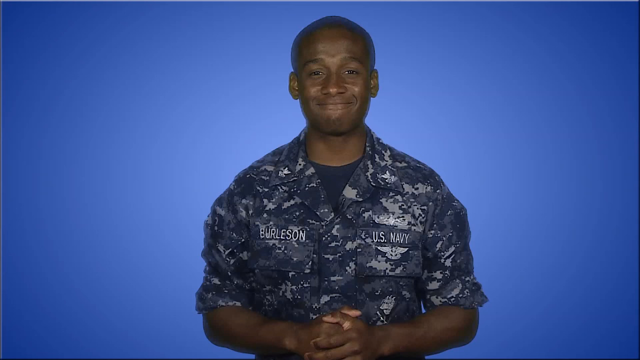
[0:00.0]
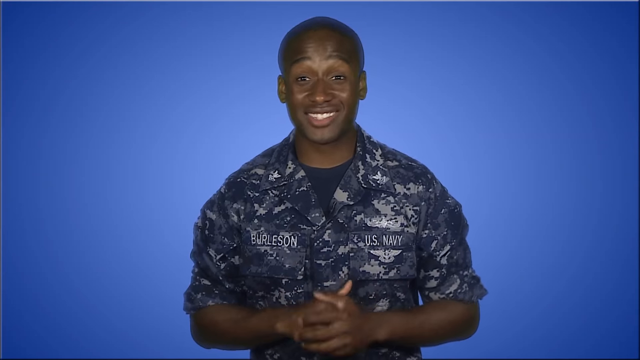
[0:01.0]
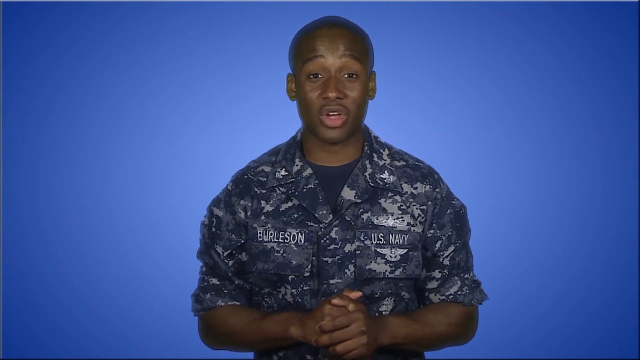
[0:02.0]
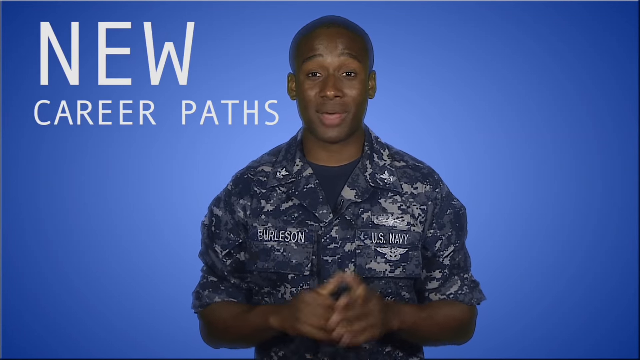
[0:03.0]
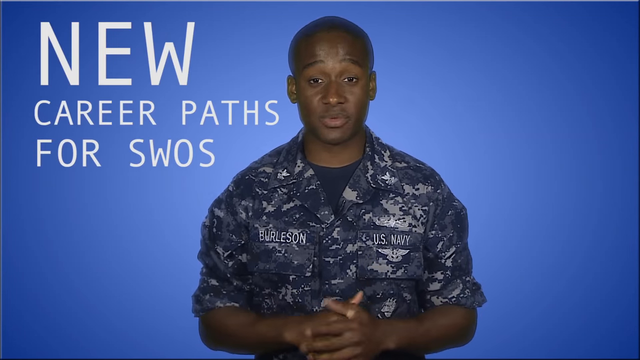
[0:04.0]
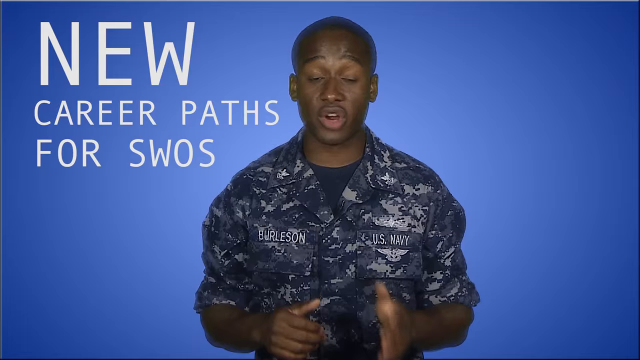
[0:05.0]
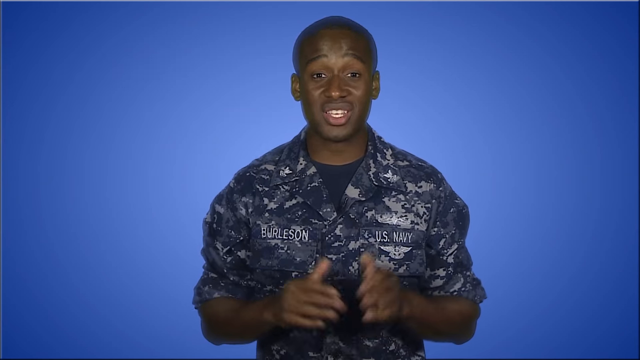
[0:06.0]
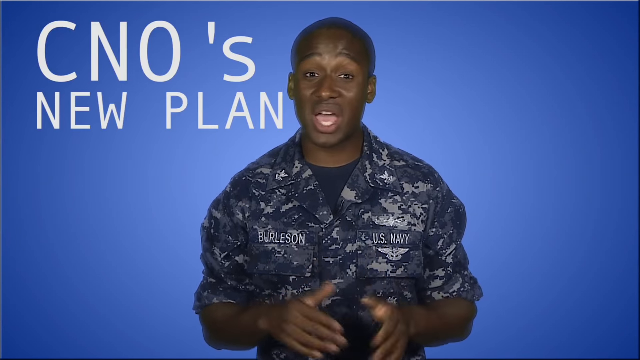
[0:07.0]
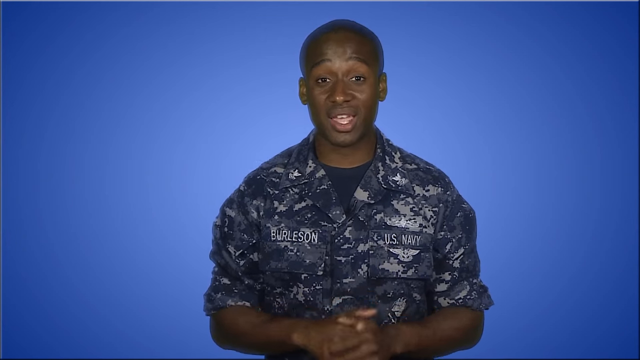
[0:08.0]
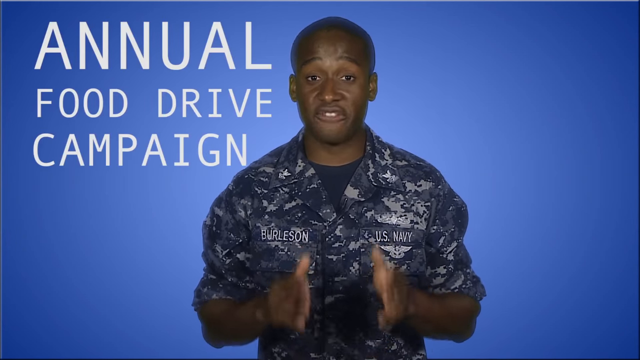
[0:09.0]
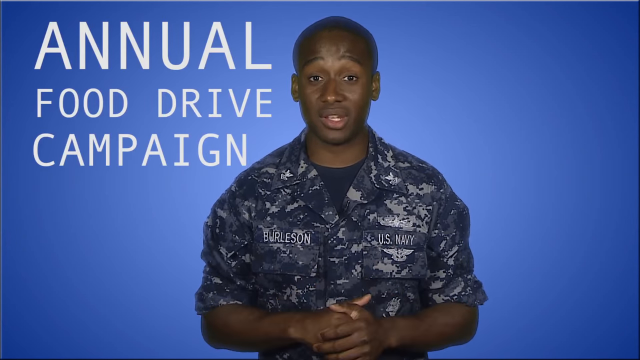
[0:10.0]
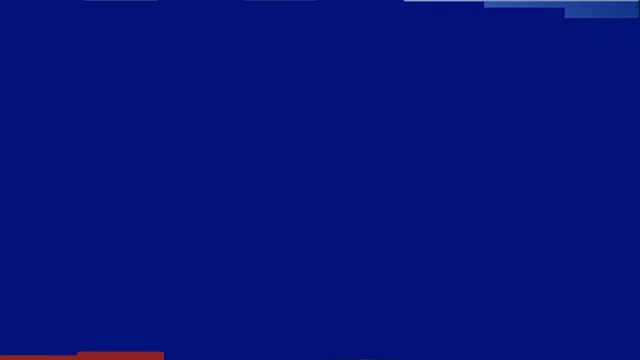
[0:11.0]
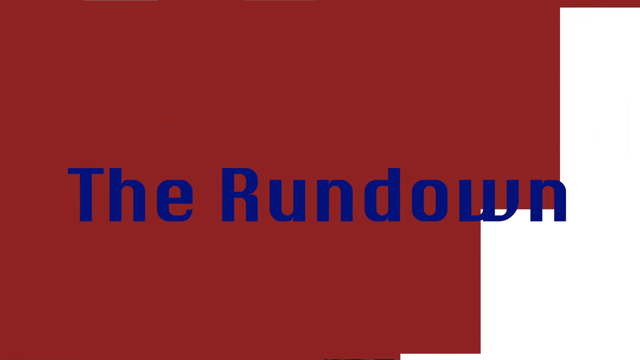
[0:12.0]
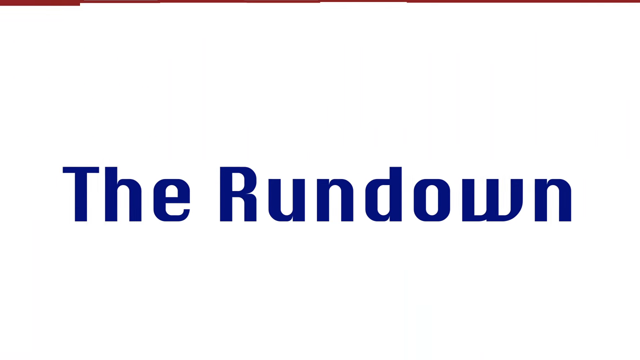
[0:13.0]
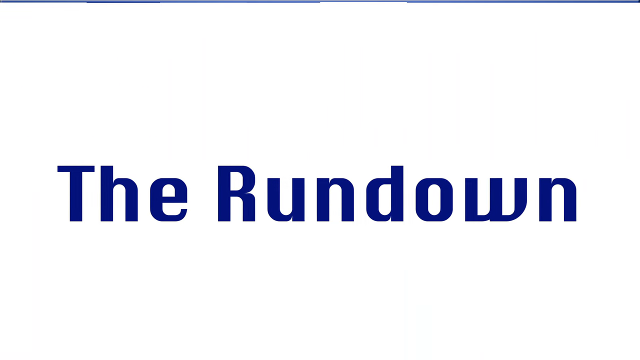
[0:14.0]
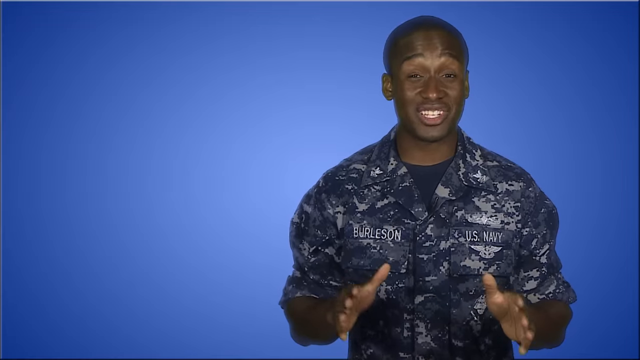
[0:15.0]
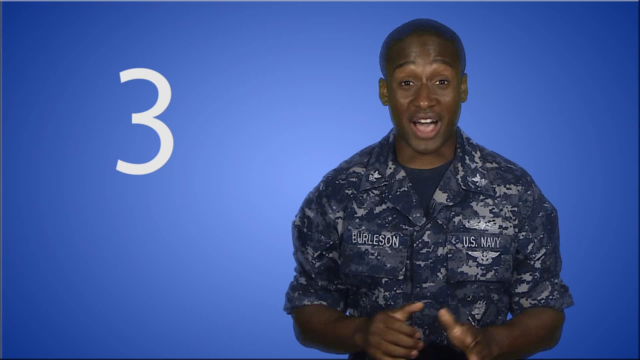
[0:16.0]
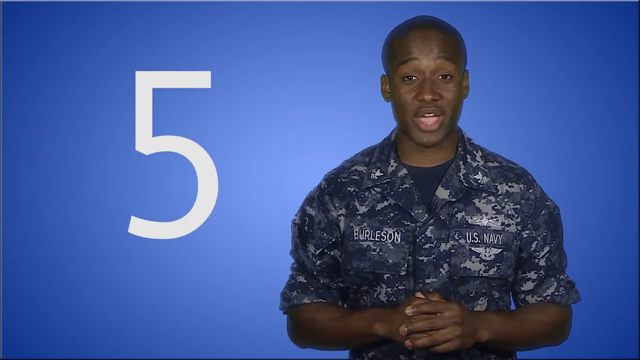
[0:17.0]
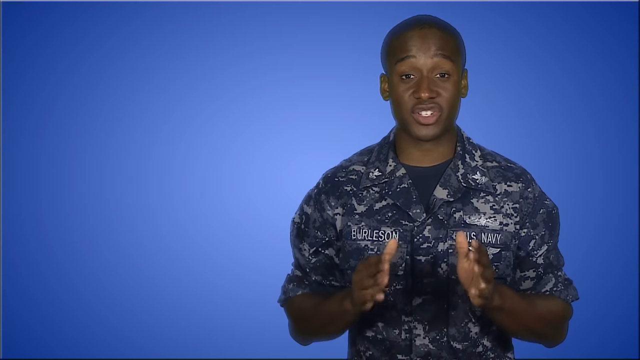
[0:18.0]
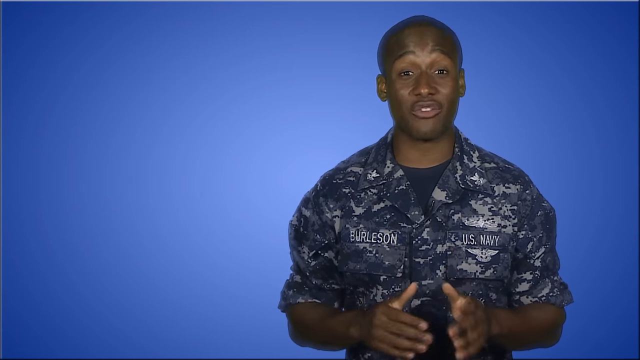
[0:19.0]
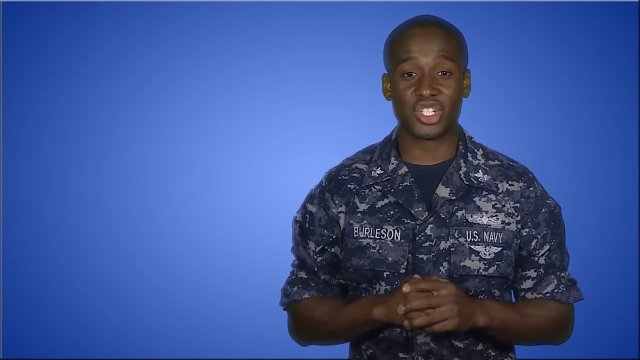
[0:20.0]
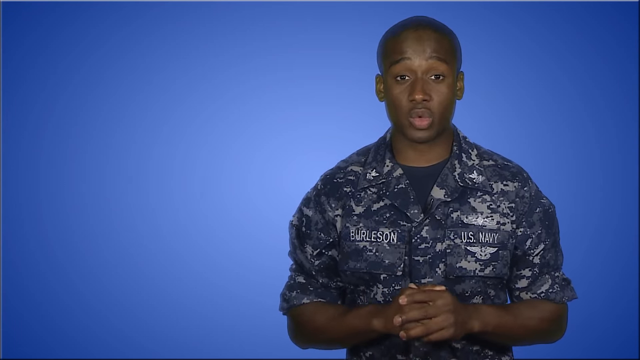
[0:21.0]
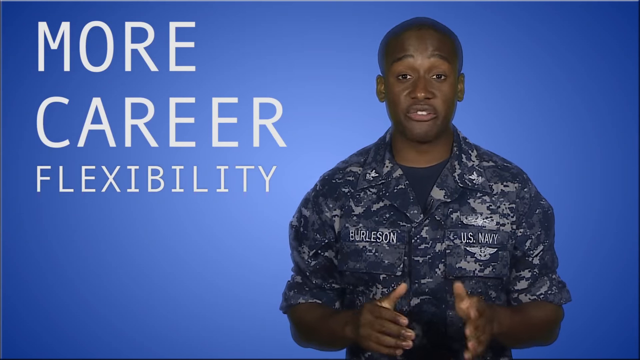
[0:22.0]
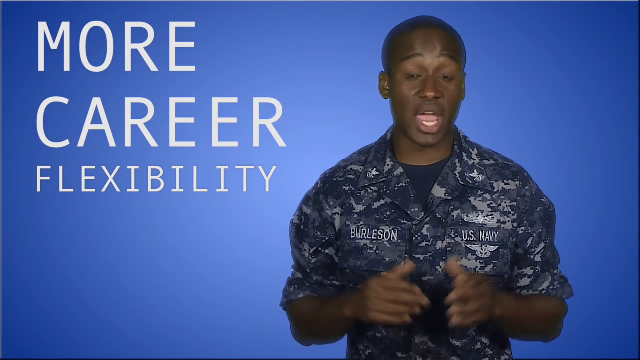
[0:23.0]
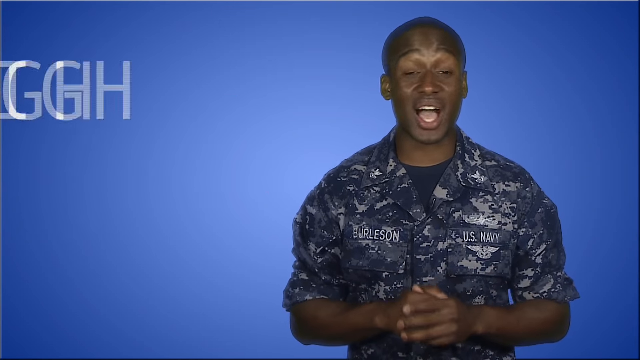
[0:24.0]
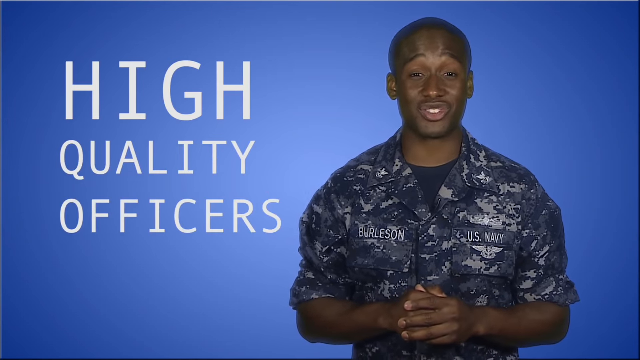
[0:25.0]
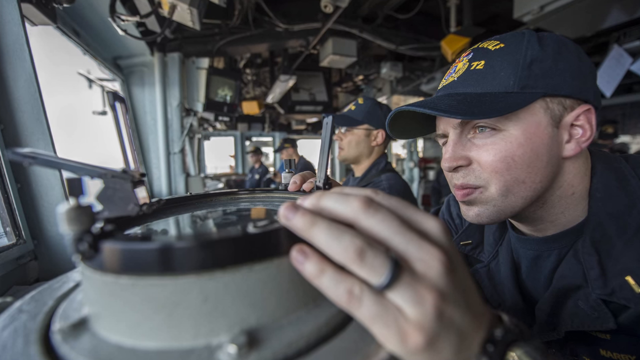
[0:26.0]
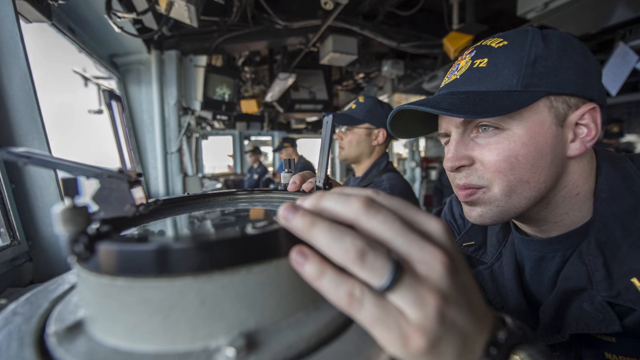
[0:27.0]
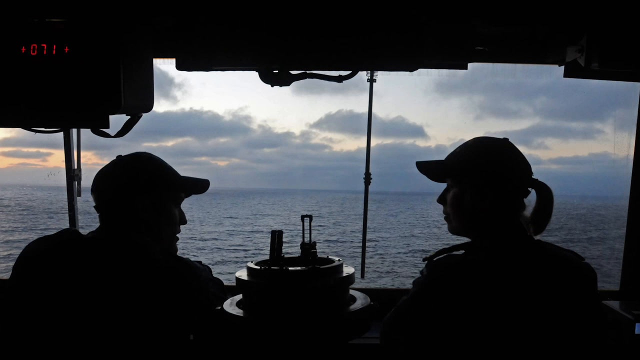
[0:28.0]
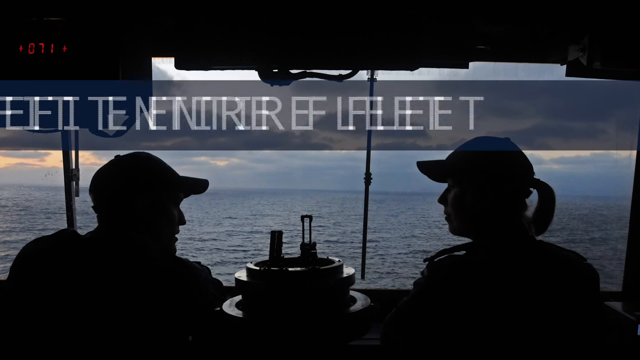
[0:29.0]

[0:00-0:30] Against a blue background, a young Black soldier with a shaved head, wearing black, gray and white military fatigues, stands in the middle of the screen, visible from the waist up. Over his right pocket it says "Burleson" and over his left pocket "U.S. Navy." He speaks to the camera with his hands clasped in front of him as white text appears on the left side of the screen: "new career paths for S.W.O.S." He continues talking, and more white text appears reading "CNO's new plan," followed by "annual food drive campaign." A kind of blue and then red screen transition follows, leading to a white screen with "the rundown" in large blue letters in the middle. The shot returns to the blue screen with the Navy officer in fatigues, now standing a bit toward the right side of the screen, while white numbers, including one, two and three, flash on the left side. He keeps speaking to the camera, and the words "more career flexibility" appear, then "high quality officers." An image follows of what looks like Navy officers in the front cockpit of a boat, with a few men sitting in their captain seats; one man seems to have one eye closed as he looks forward with the other. Another image shows what looks to be a man and a woman looking off the side of a boat, seen as black silhouettes as the sun goes down, both wearing caps and apparently looking at each other. At the top of the screen, big white letters read "benefit entire fleet."